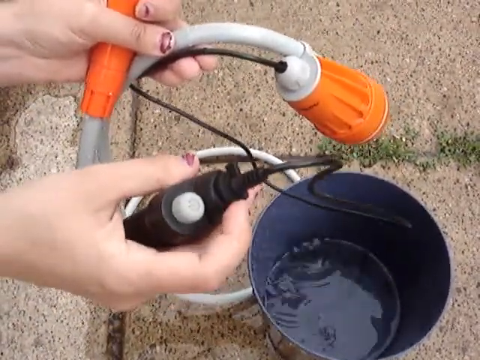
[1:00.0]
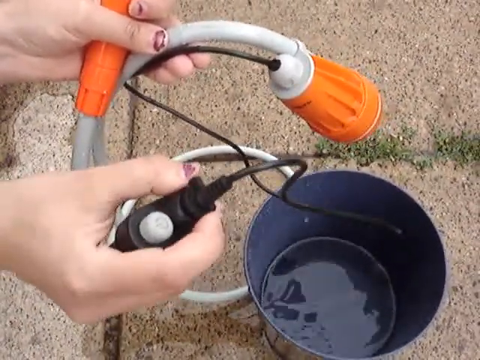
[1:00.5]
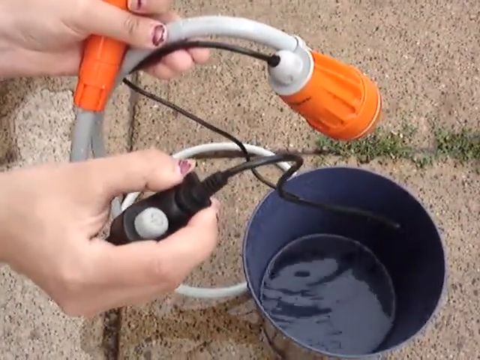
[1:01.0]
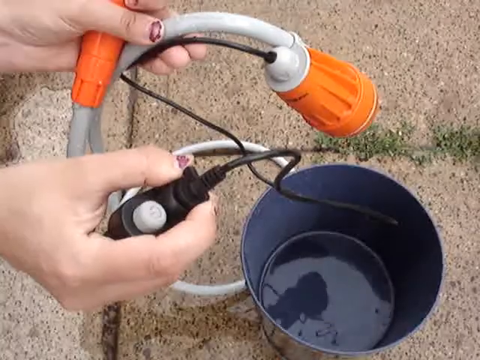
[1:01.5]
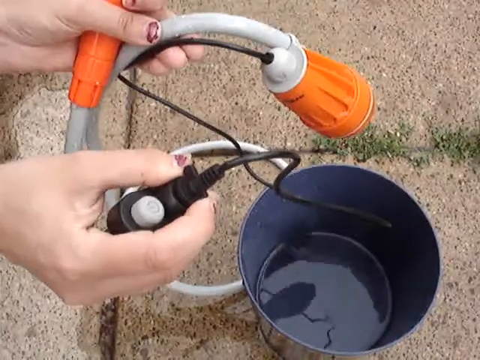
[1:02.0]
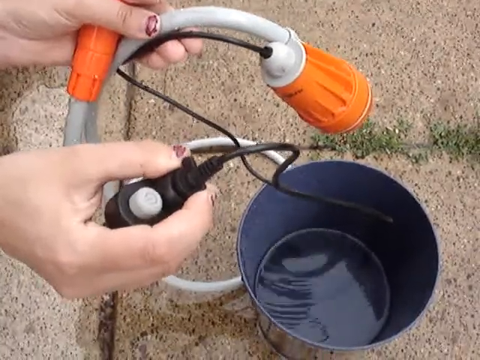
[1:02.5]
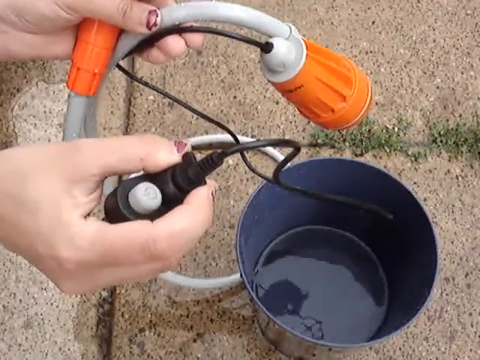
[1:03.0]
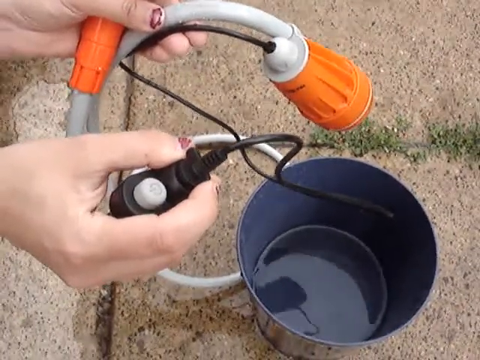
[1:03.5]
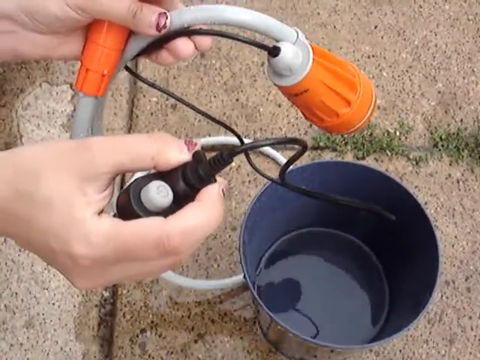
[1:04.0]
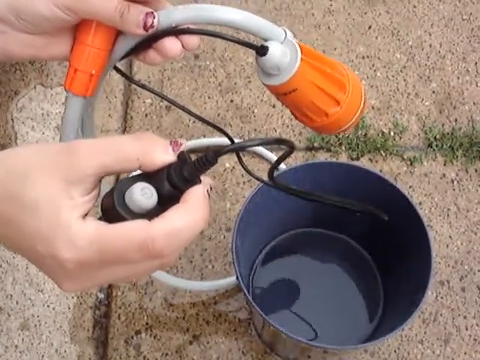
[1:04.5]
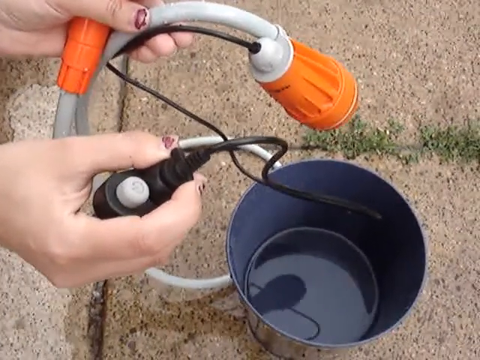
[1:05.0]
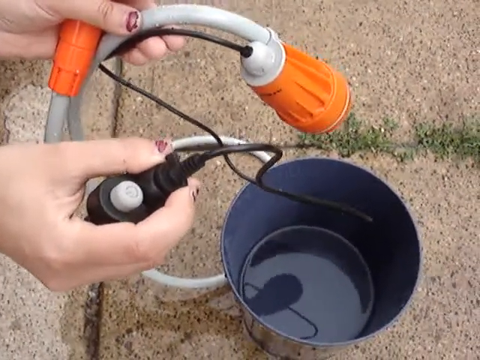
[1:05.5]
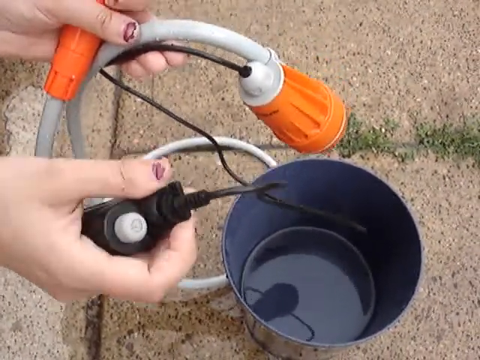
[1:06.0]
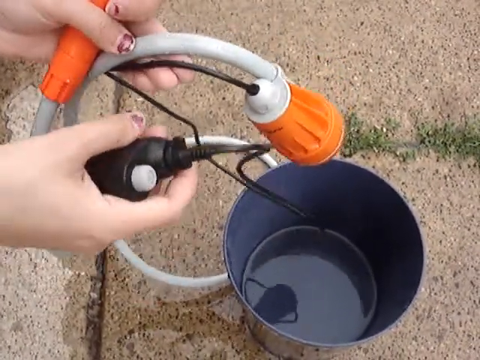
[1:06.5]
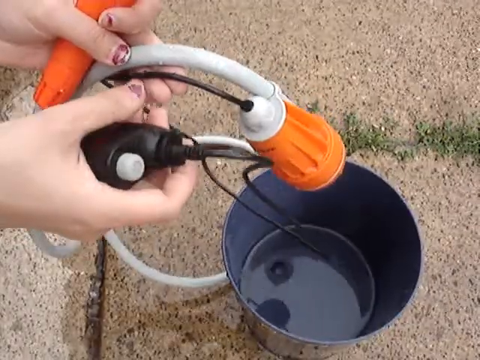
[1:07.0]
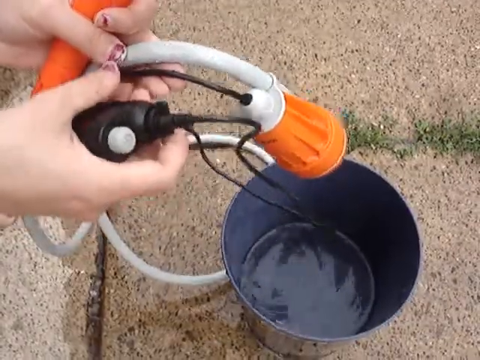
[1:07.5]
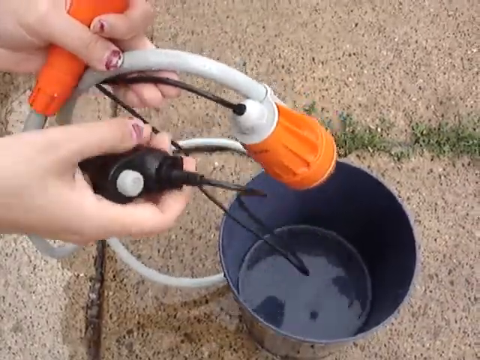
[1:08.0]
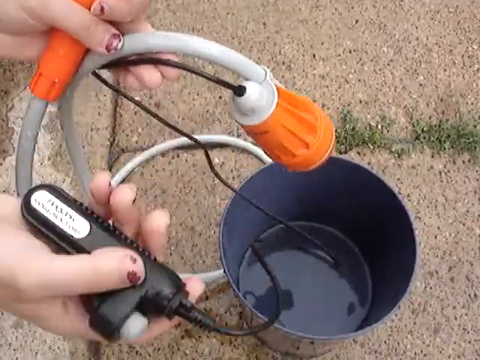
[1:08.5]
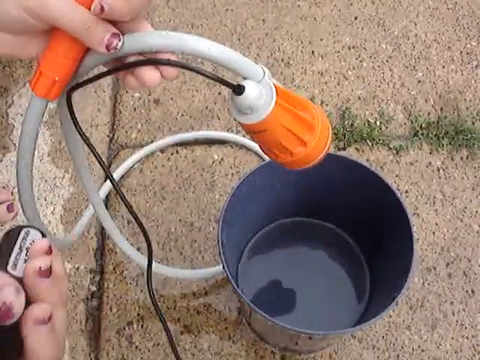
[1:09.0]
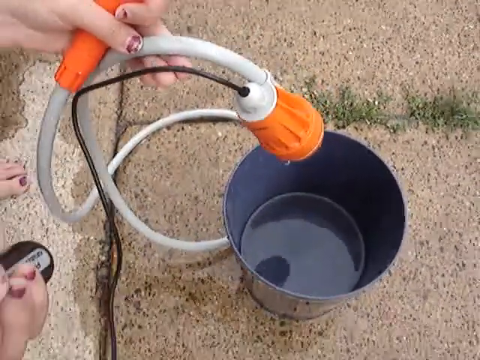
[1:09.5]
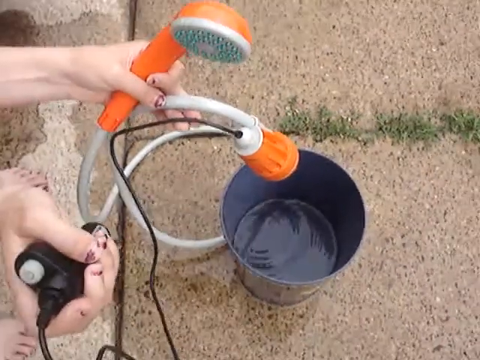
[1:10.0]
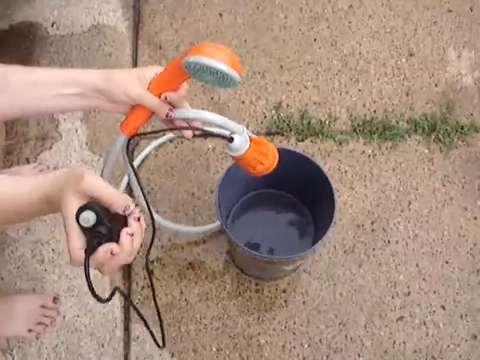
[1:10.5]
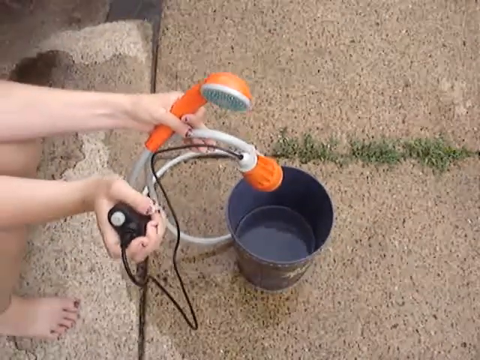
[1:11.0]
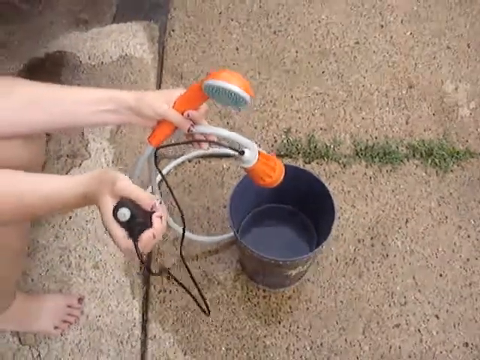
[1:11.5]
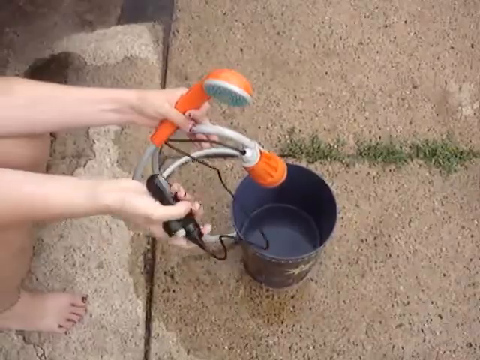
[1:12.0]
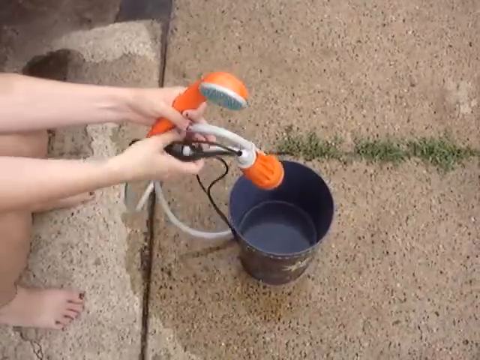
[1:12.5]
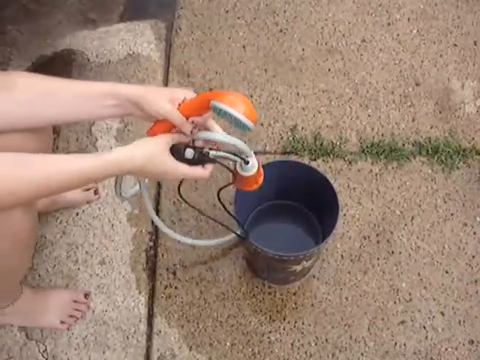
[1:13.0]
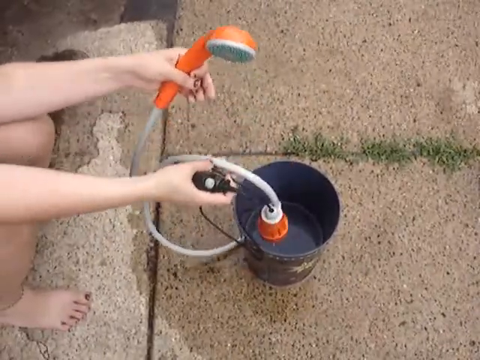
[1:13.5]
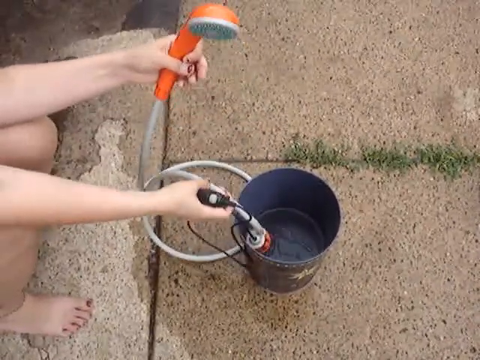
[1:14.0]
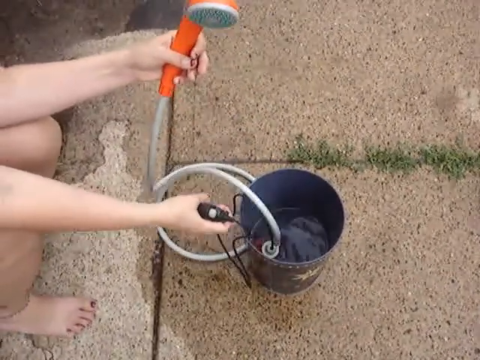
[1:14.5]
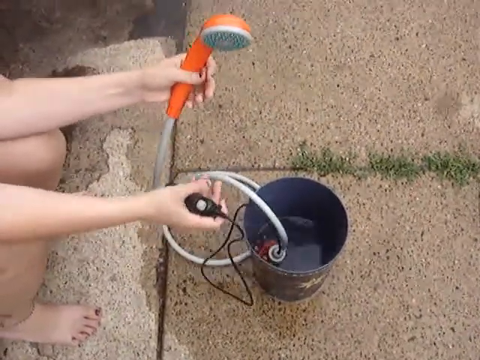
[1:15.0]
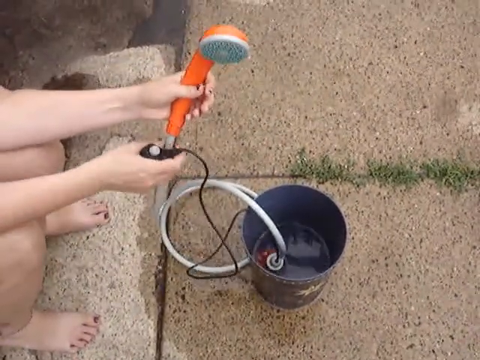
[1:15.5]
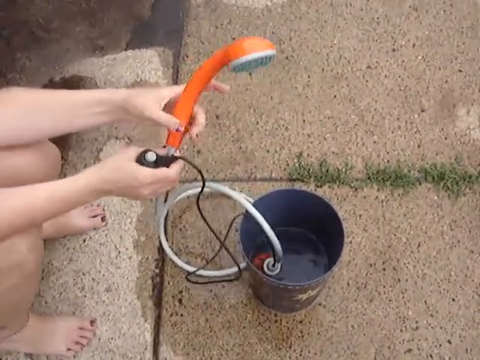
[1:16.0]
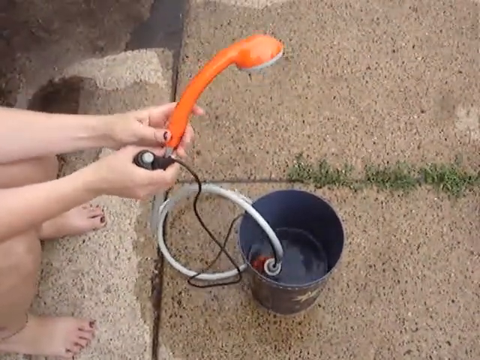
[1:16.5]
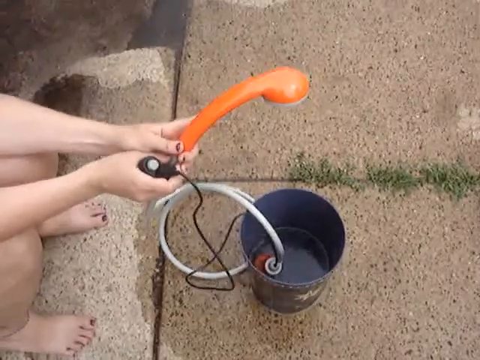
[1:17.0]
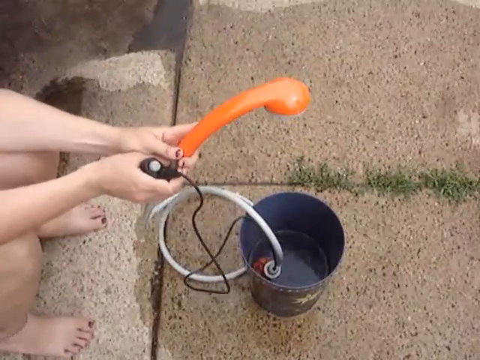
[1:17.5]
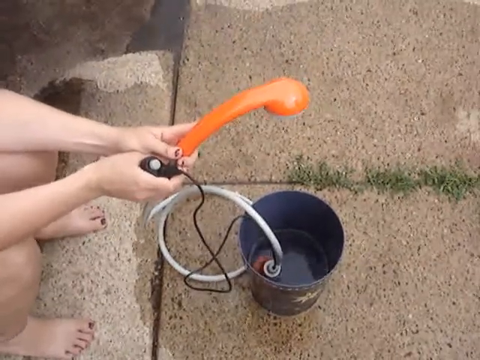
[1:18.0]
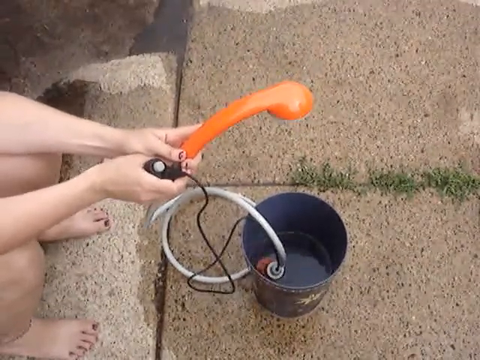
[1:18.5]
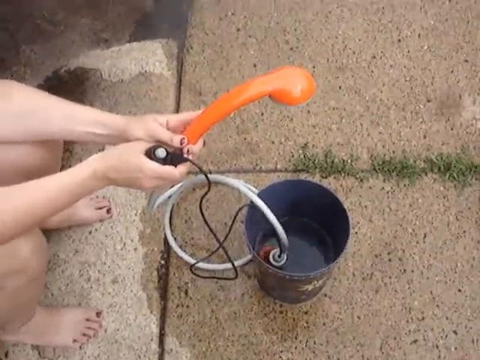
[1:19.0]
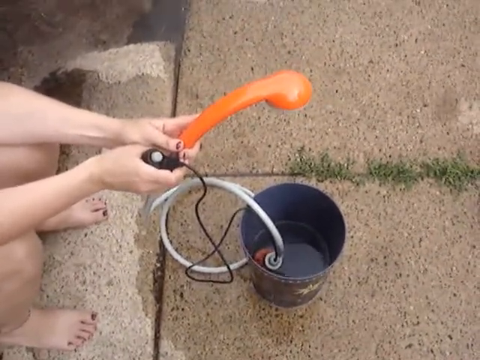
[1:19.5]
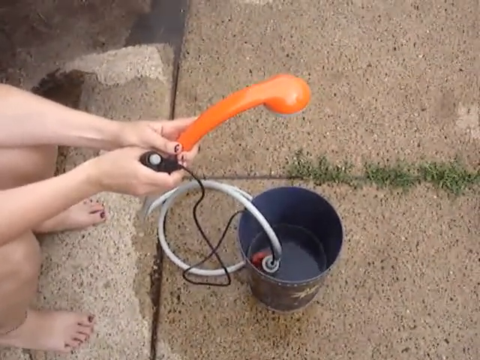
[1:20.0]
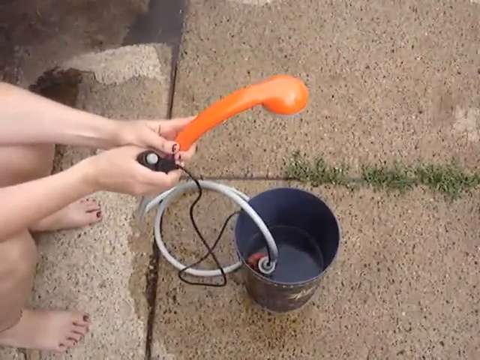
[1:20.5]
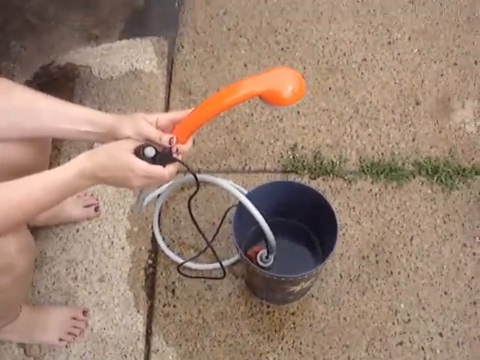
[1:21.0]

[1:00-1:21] In the frame are the woman's hands, part of the shower head, the pump, the remote for the pump, and the bucket from which the water was dispensed. In the background is pavement with grass growing from its cracks; the pavement is darker in some regions and lighter in others, apparently because it is wet. As the woman gestures, she holds the remote in her right hand and the shower head and water pump in her left hand. As she moves the water pump back and forth, water spills out of it and drops into the bucket below. The camera then zooms out to a wider perspective, and the woman's feet and legs come back into view. She neatly places the water pump back into the water bucket while holding onto the remote and the shower head.